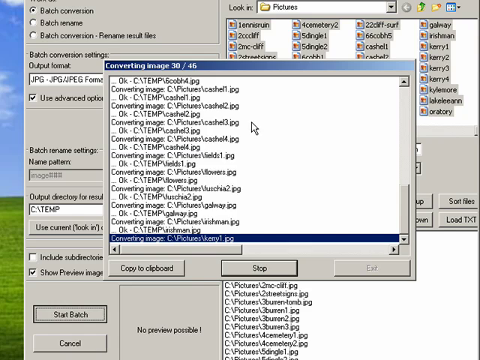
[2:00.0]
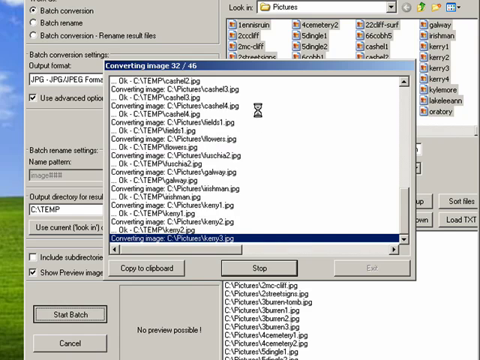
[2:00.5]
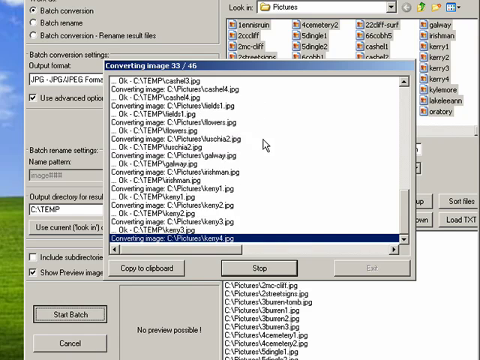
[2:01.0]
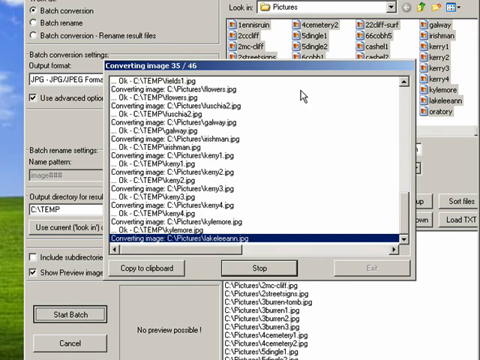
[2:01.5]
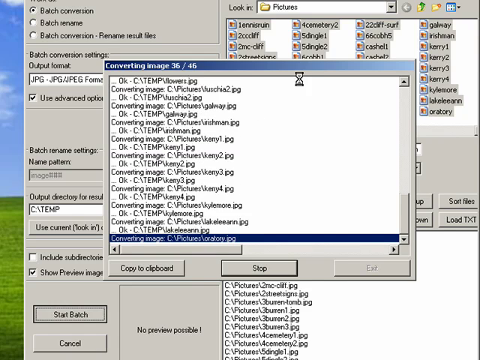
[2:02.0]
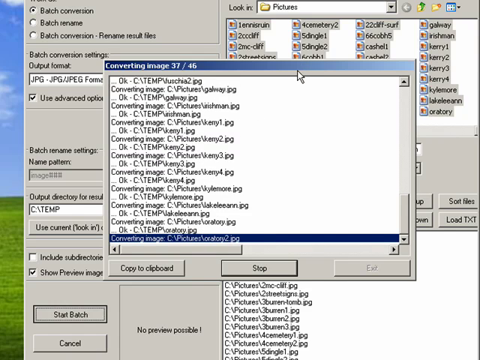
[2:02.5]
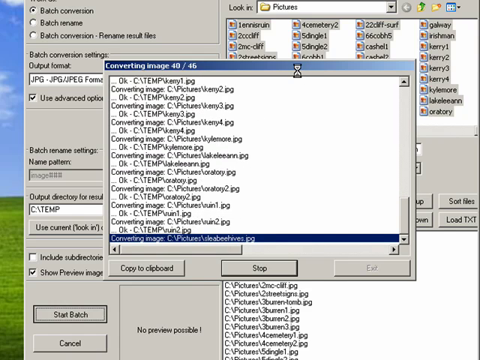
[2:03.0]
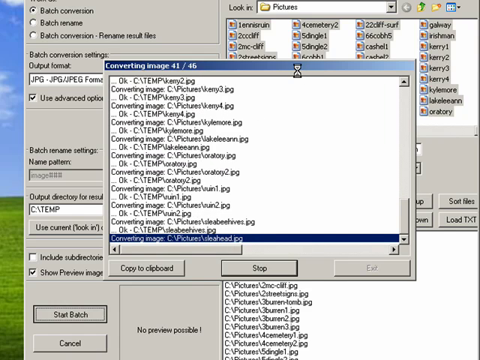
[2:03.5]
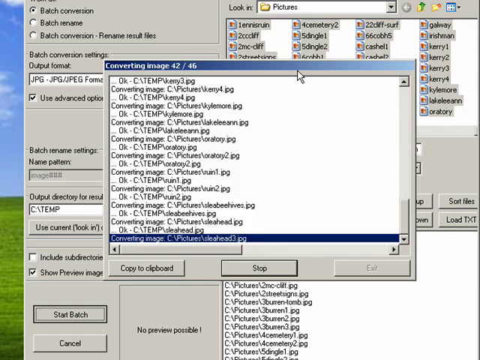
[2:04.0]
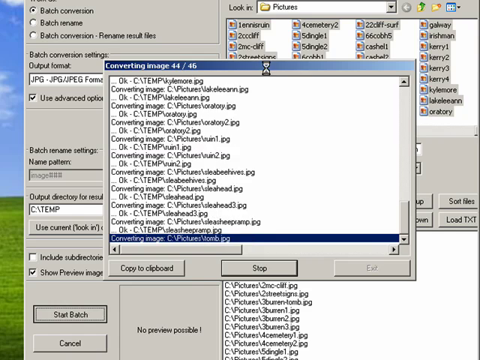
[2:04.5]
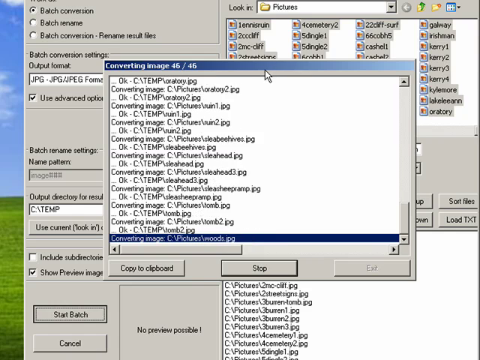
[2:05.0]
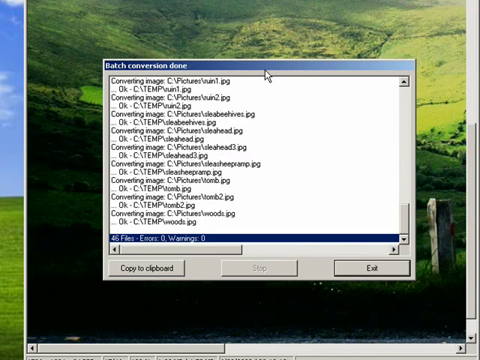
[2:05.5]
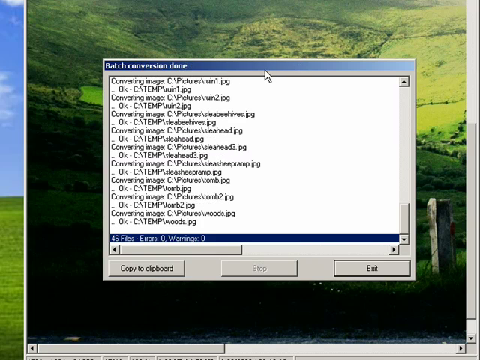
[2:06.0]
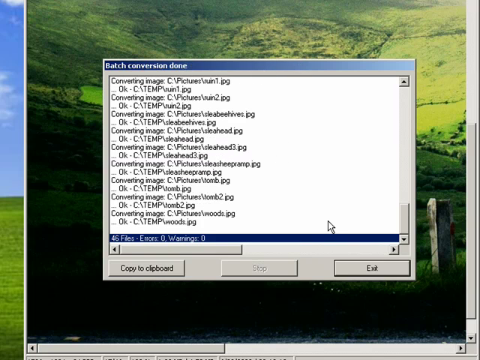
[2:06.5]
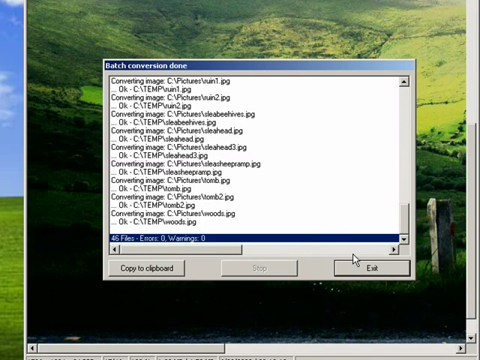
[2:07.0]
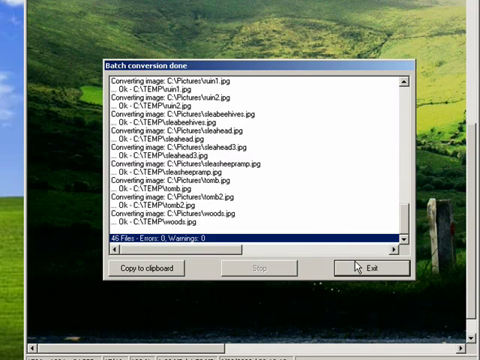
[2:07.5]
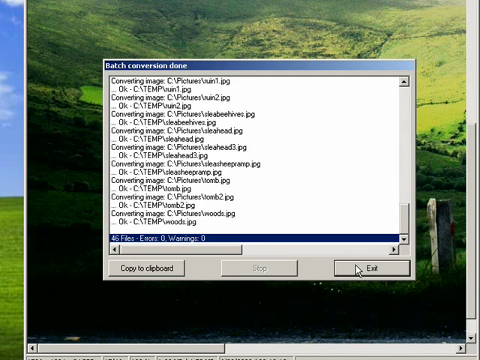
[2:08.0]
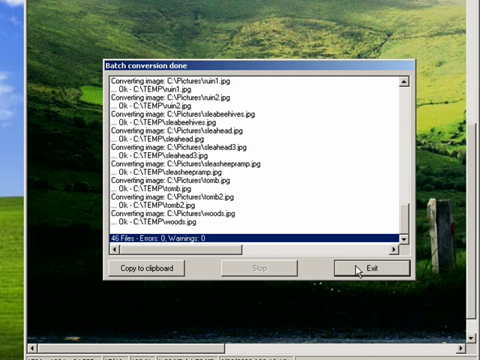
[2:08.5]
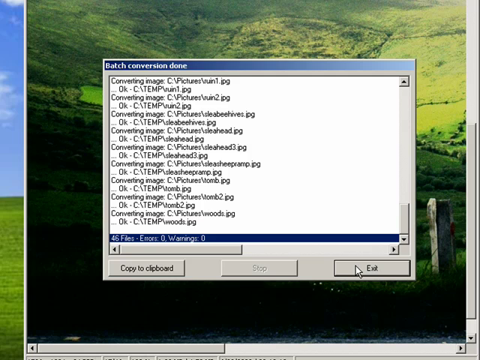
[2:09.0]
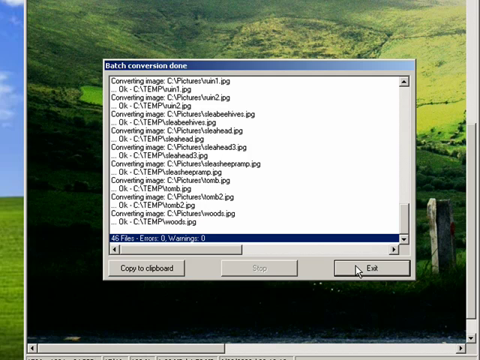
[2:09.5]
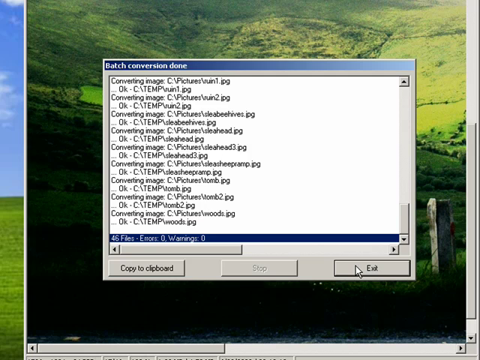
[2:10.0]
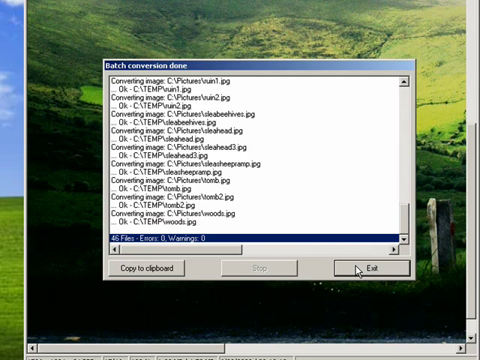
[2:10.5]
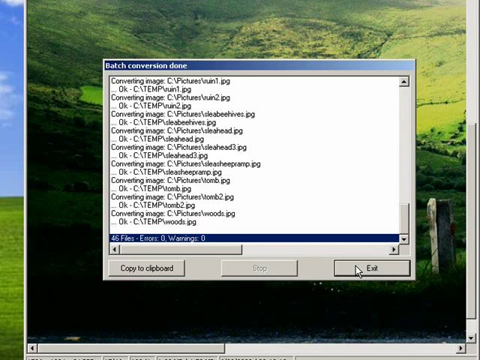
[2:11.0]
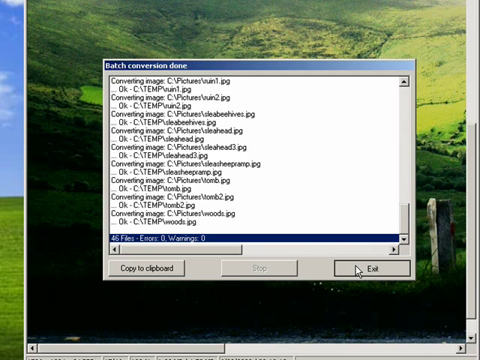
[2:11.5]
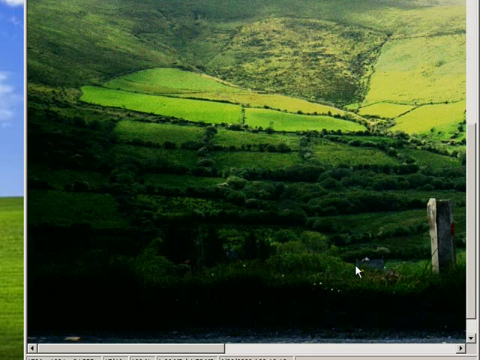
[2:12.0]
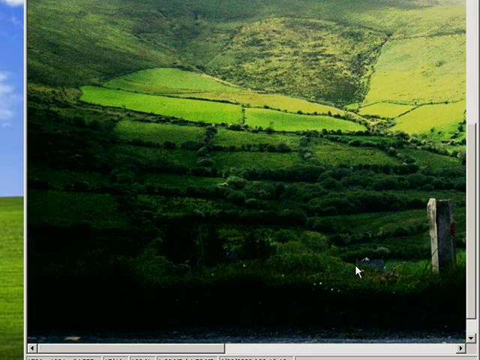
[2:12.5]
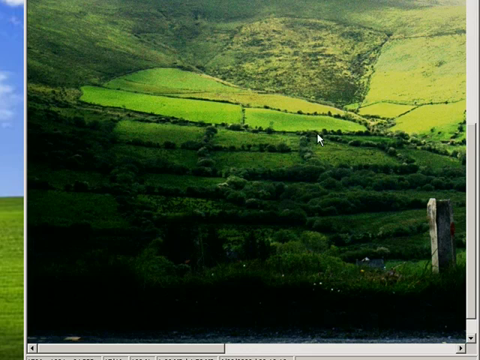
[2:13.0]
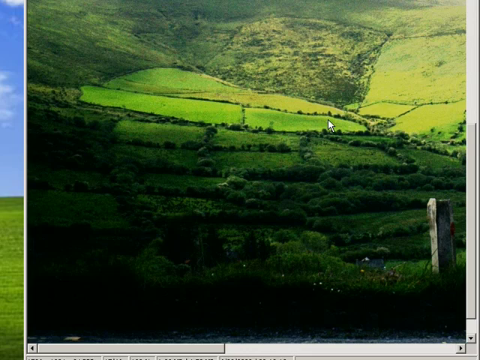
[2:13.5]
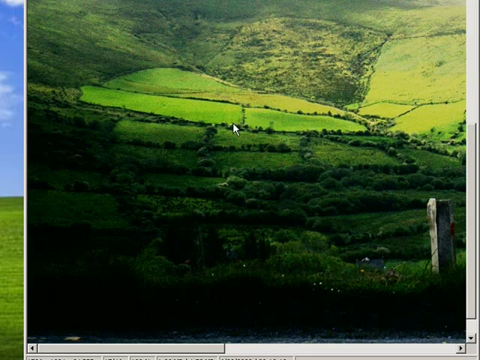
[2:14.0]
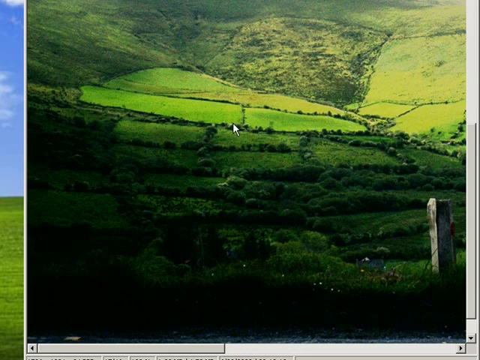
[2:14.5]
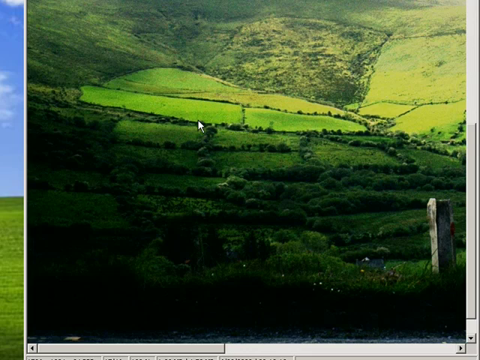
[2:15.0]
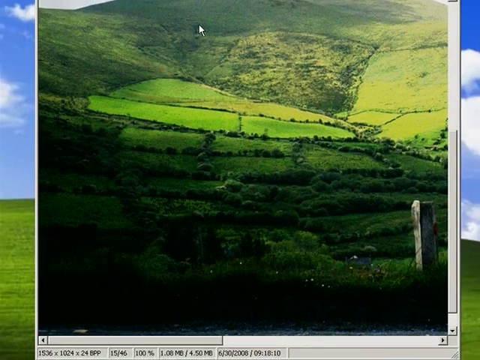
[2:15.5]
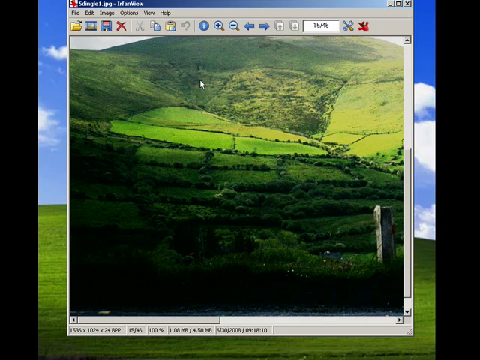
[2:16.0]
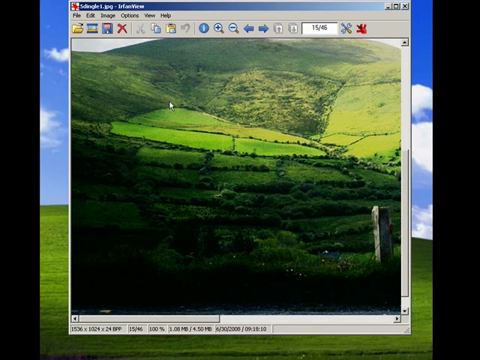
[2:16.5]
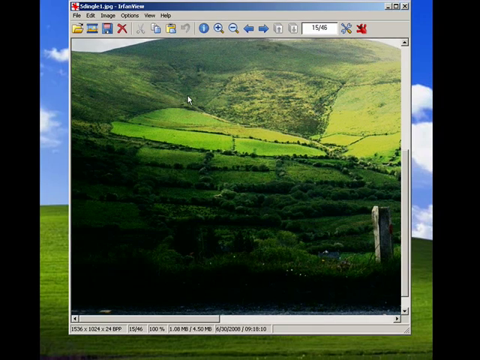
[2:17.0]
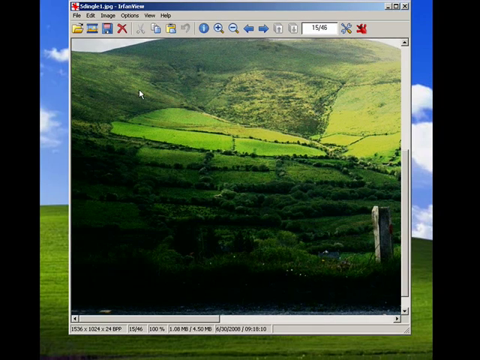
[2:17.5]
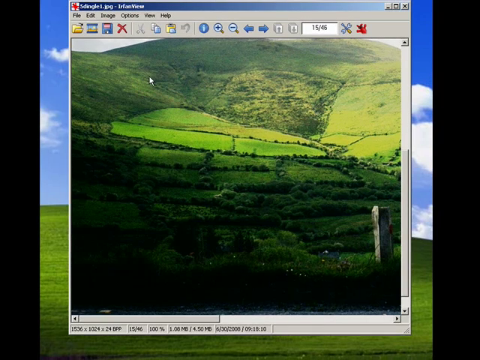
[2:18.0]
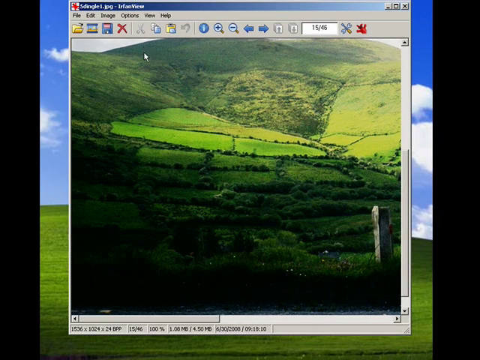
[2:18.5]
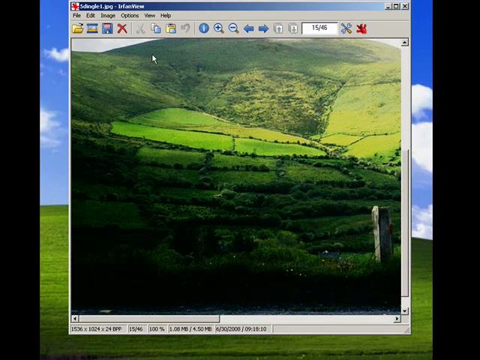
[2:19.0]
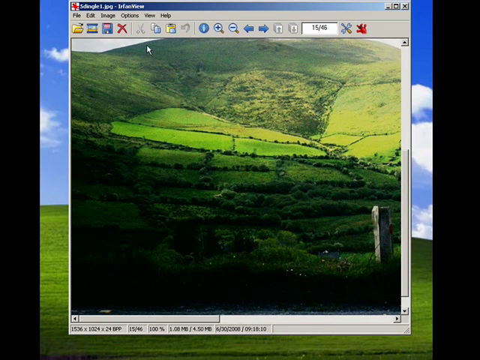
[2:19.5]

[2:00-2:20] An open computer screen shows two open text boxes. The header of the first box reads "Converting image 30 of 46" as a list of files appears in the text box below. The white arrow cursor occasionally changes into a small hourglass cursor as the list continues. When it reaches the end, the larger open box behind this box disappears and changes to a photograph, and the header of the small box changes to "Batch conversion done." The small box then disappears, and the photograph is seen in its entirety: what looks like rolling green hills with rectangular separations delineated by trees and bushes. In the lower right of the screen is what looks like a tall stone monolith in the grass. The white arrow cursor moves about the screen, and the camera pulls away so that the computer's screensaver is visible around the open page.